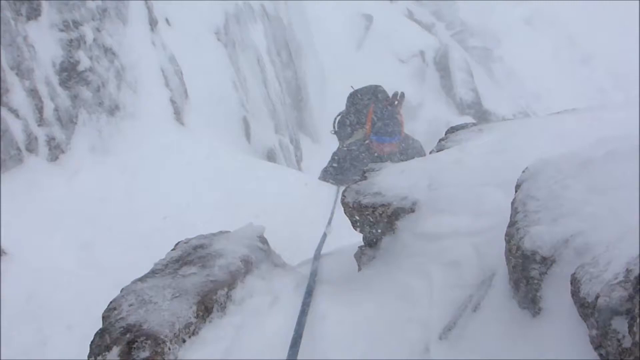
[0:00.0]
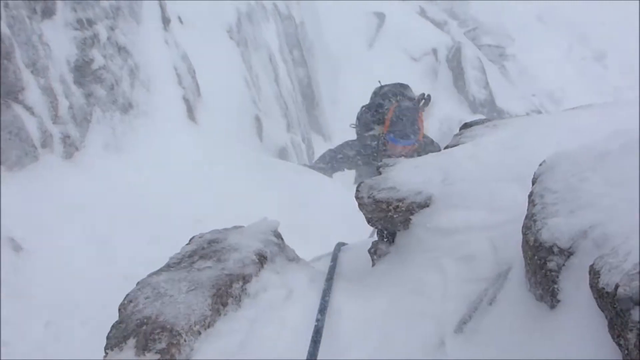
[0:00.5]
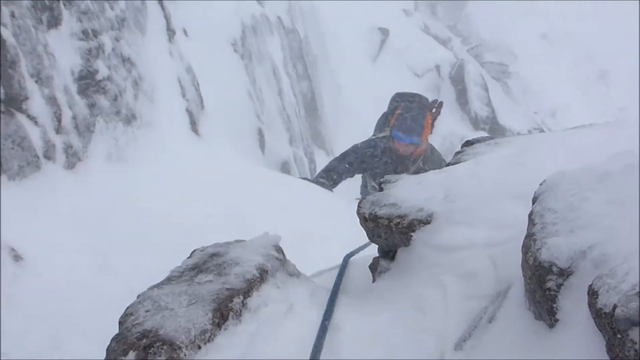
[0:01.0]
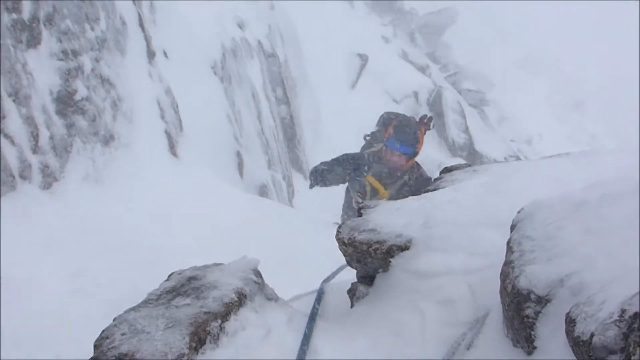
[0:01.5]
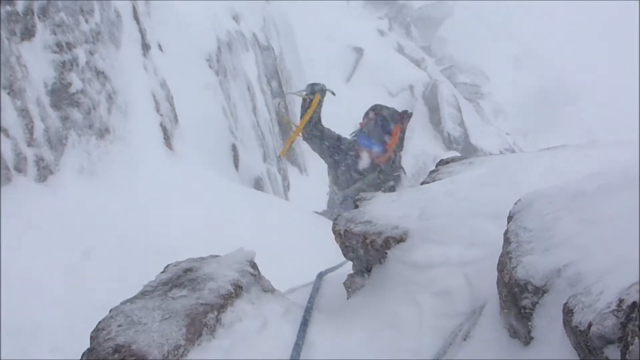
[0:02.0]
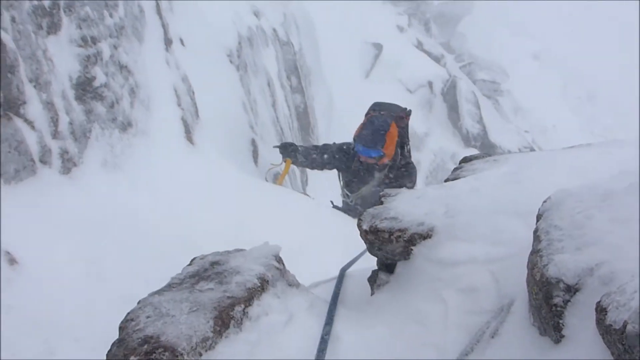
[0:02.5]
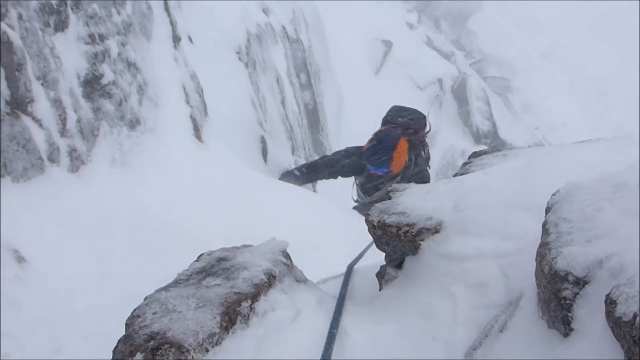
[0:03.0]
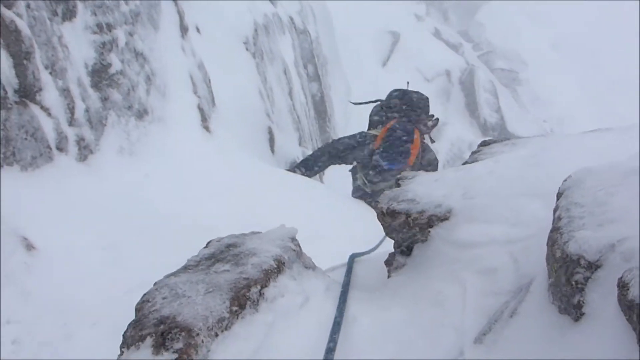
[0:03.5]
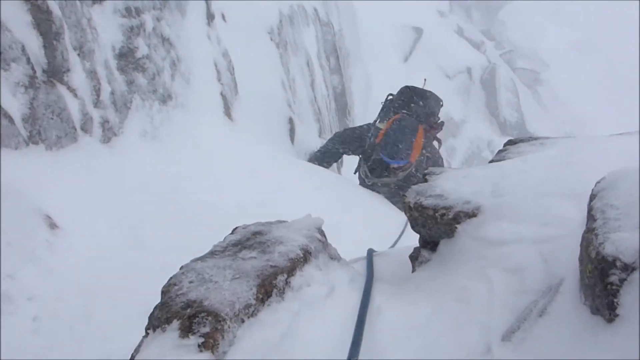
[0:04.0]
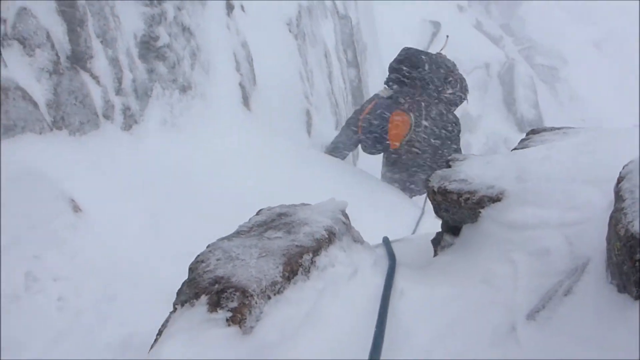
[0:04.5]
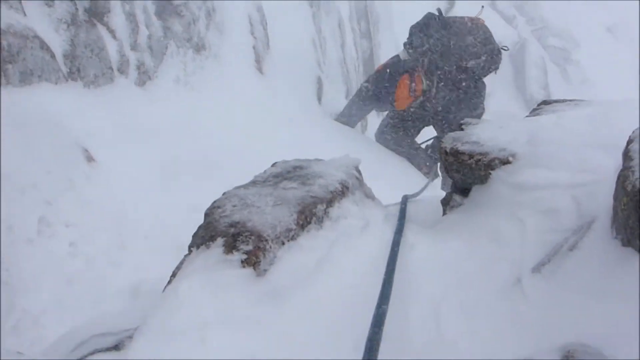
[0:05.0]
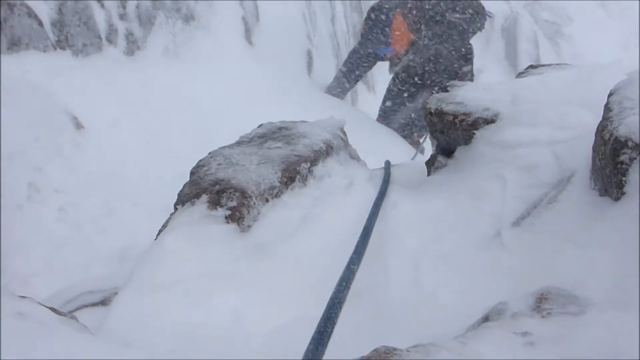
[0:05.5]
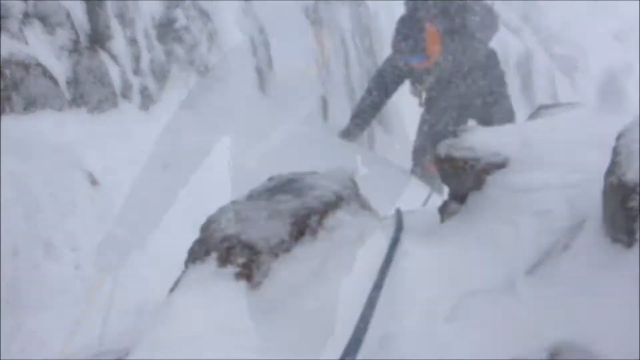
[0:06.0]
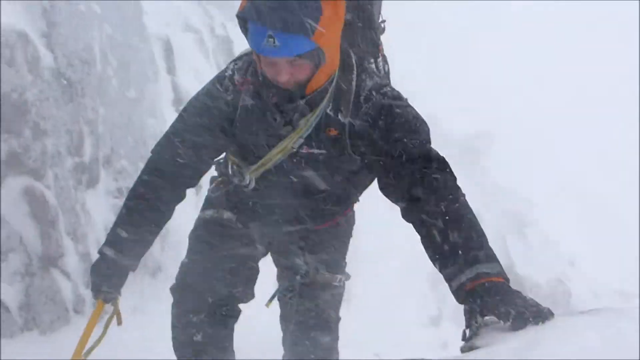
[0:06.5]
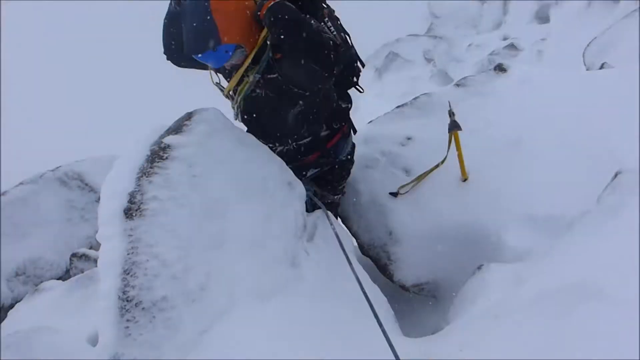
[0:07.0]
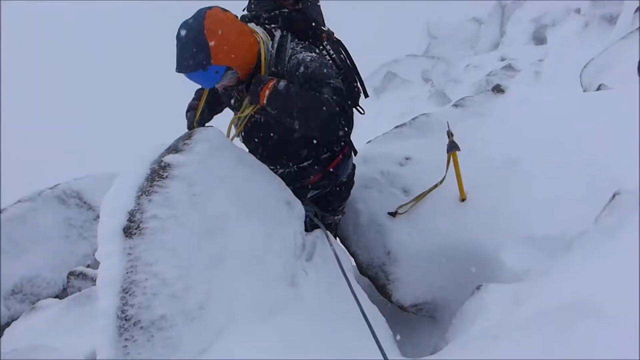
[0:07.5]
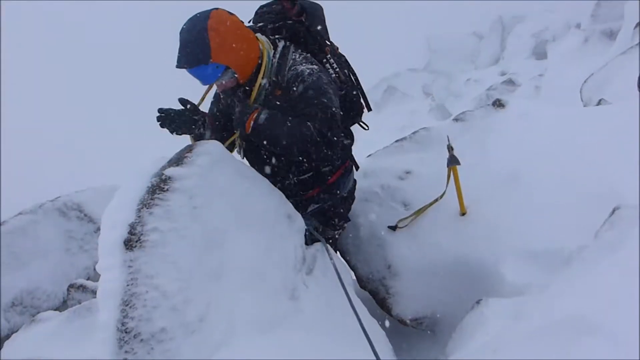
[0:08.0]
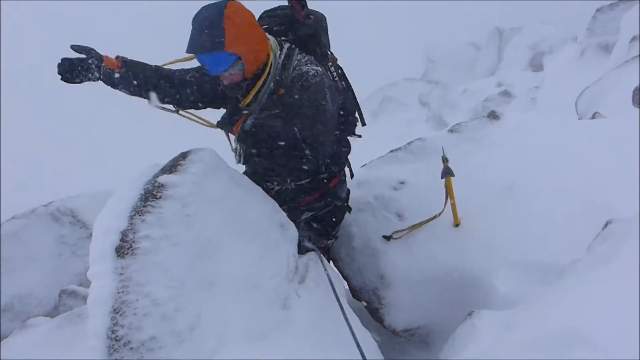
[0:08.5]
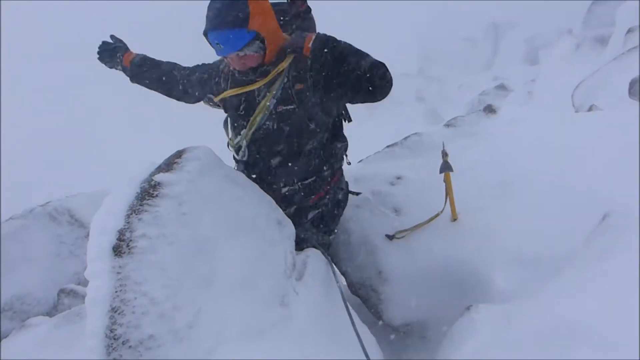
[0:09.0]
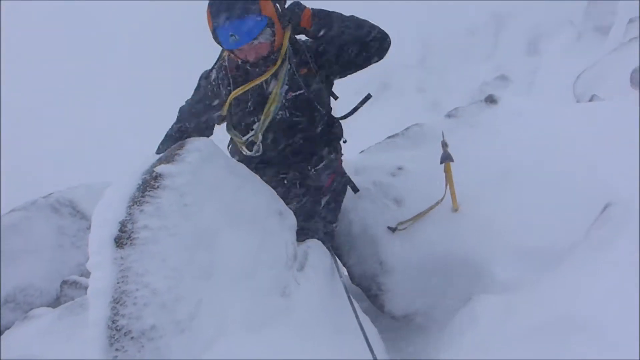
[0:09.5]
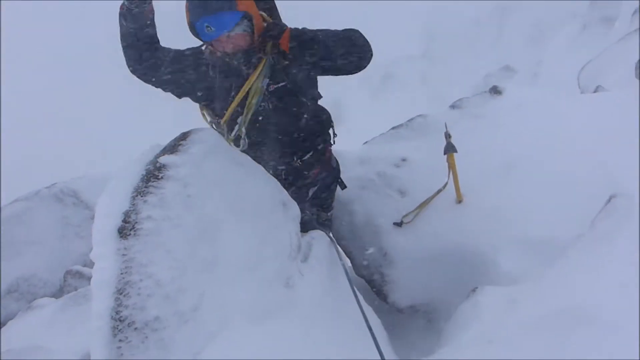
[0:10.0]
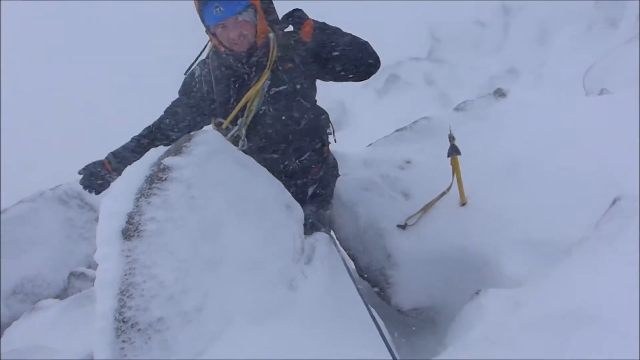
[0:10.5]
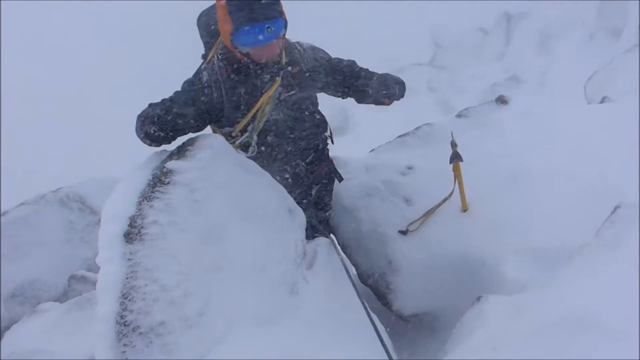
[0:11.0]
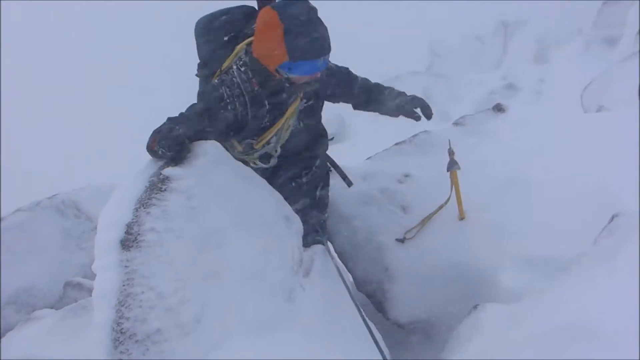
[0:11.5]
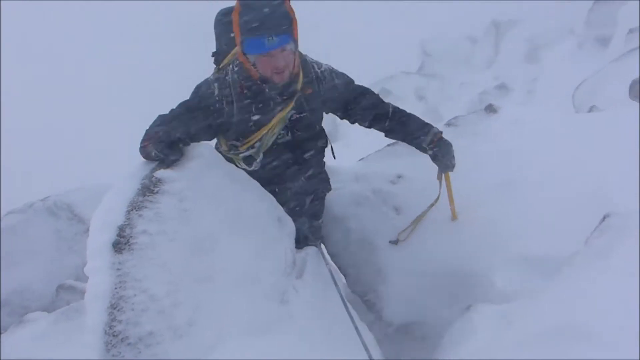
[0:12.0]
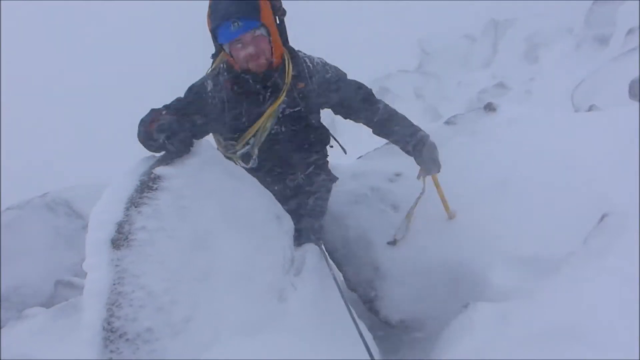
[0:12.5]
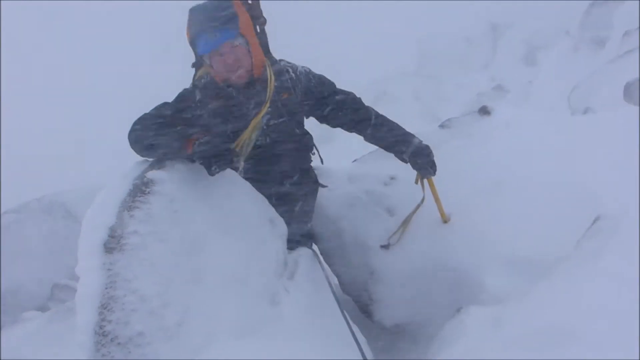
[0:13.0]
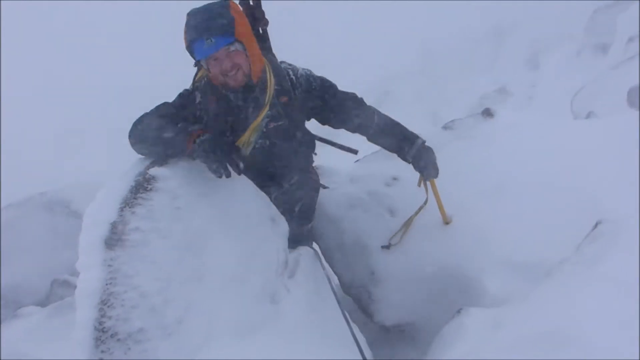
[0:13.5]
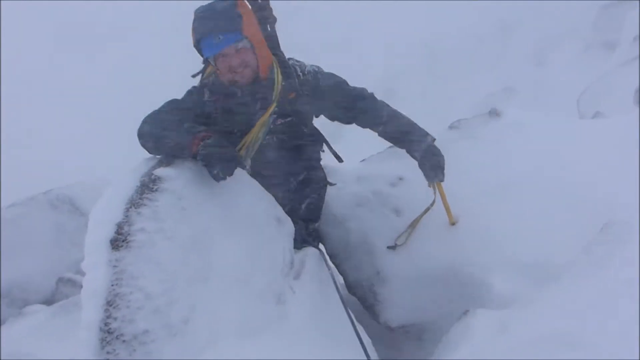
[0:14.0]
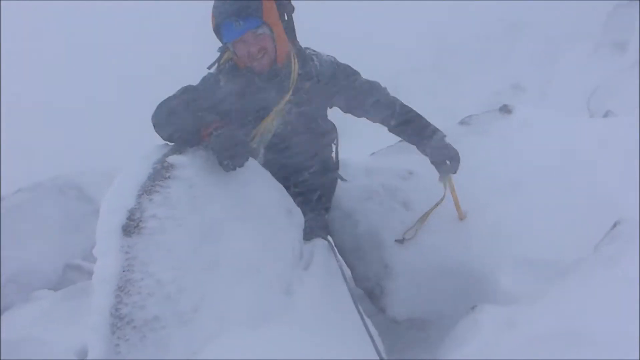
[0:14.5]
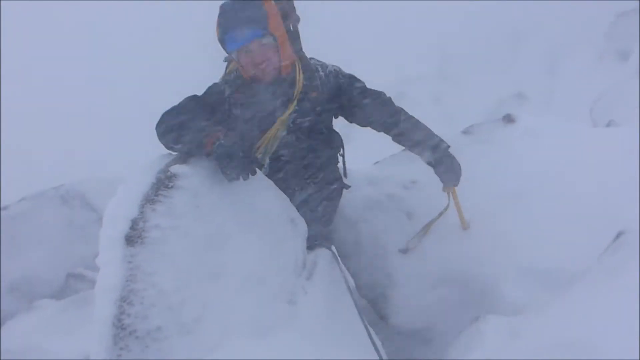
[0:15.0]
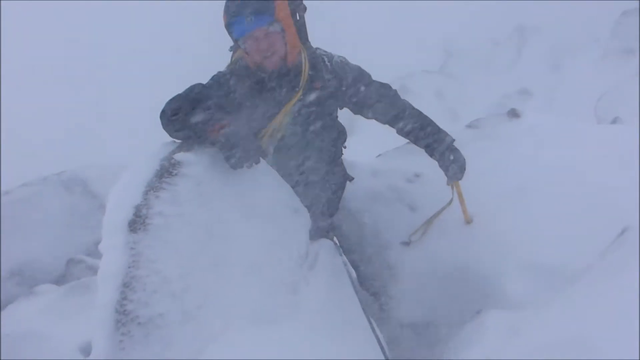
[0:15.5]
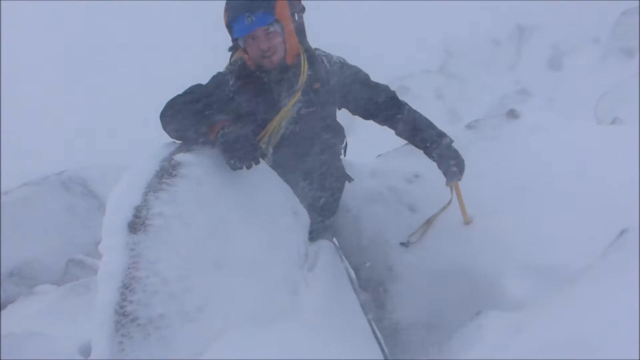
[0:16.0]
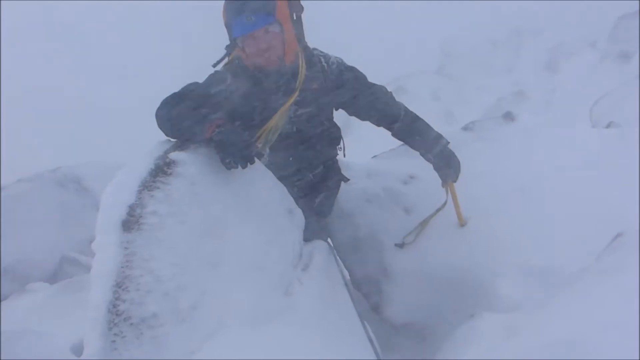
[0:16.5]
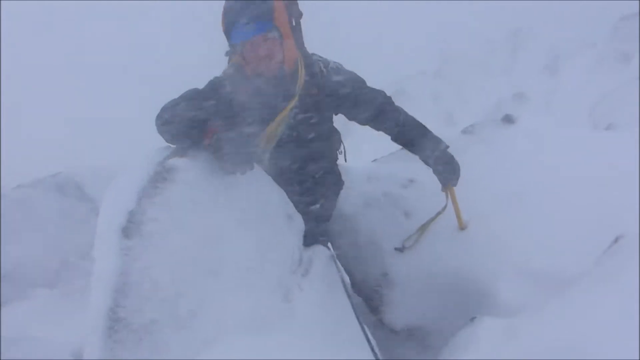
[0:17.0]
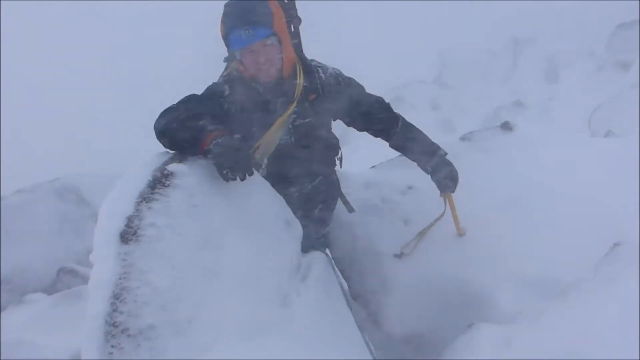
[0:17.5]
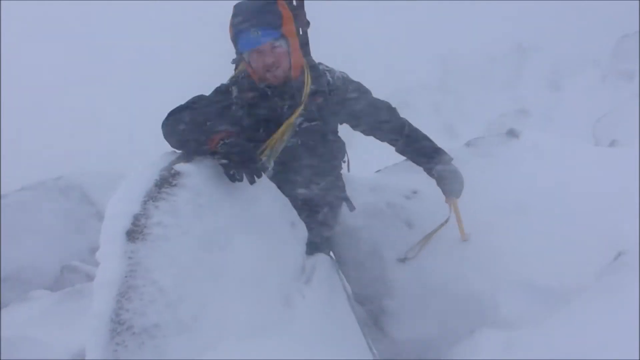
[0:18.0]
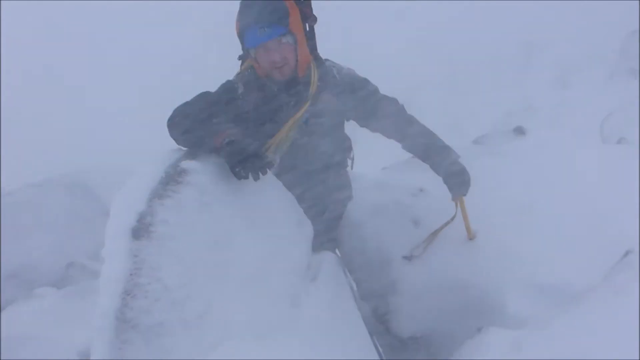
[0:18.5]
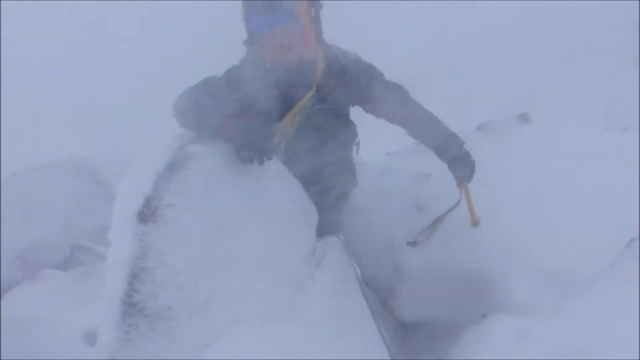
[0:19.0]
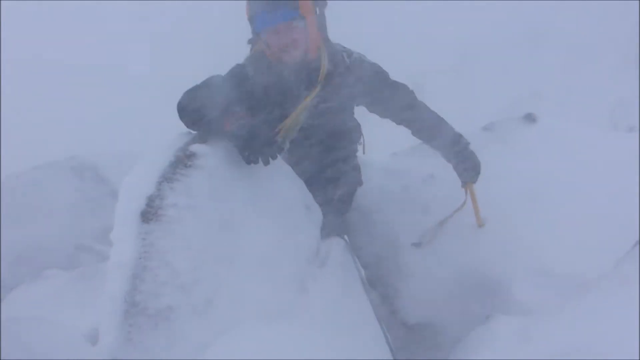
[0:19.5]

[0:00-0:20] The camera looks down at a mountain climber as he climbs up a mountain. Conditions are very snowy, with sleet, and there is snow and ice on the mountains. He wears a backpack and has a yellow pole that he jabs into the ground for stability as he comes up. His jacket is a dark color with orange on the sides of the hood. He gets to roughly the top area and seems to start taking off some of his apparel, or maybe he is just fixing it. He then looks at the camera, holding the pole in the snow with his left hand and leaning one arm on a boulder that has ice and snow on it. He appears to be talking into the camera. The sleet and snow move left to right, almost parallel to the ground. He apparently wears dark gloves. Toward the end, nothing can be seen behind him; it is all white.